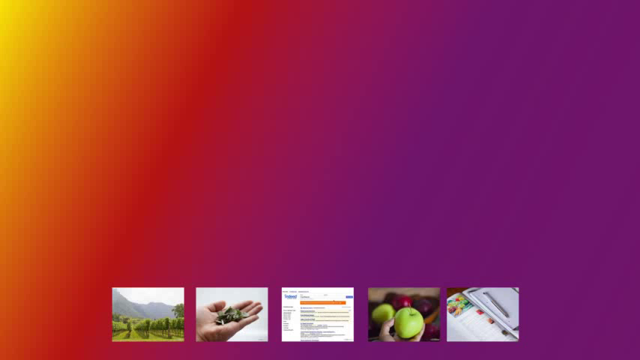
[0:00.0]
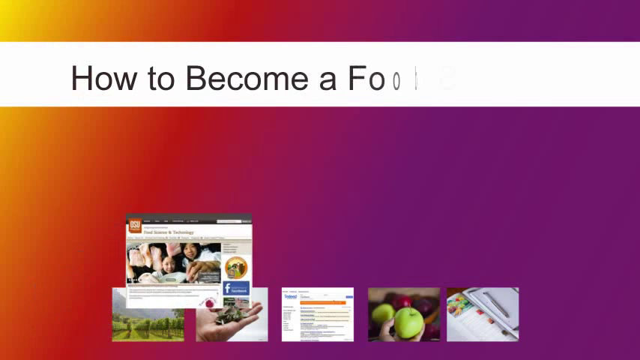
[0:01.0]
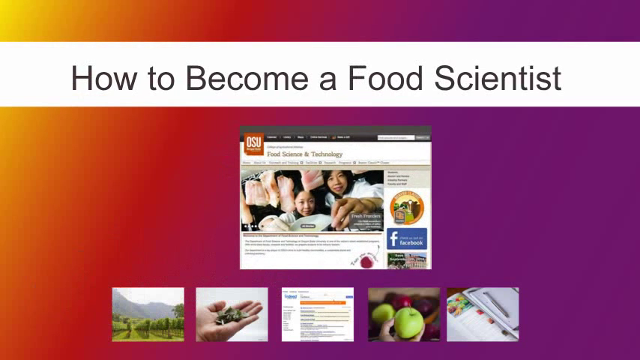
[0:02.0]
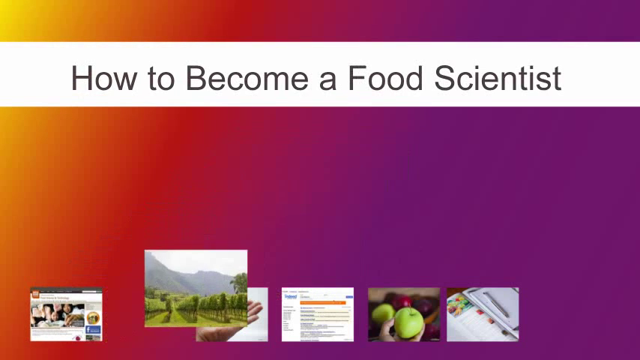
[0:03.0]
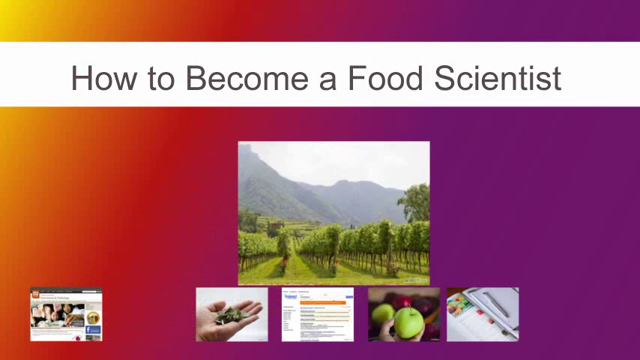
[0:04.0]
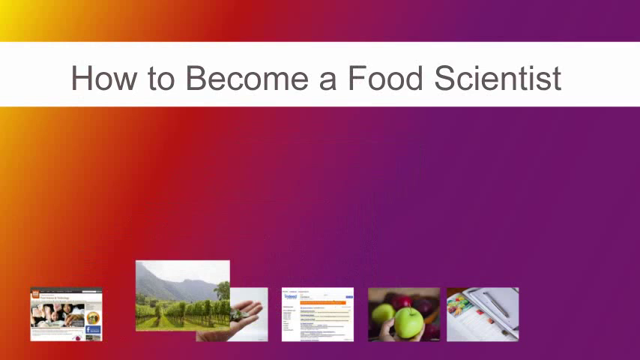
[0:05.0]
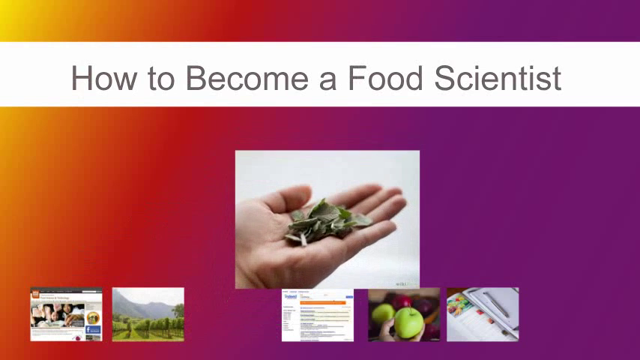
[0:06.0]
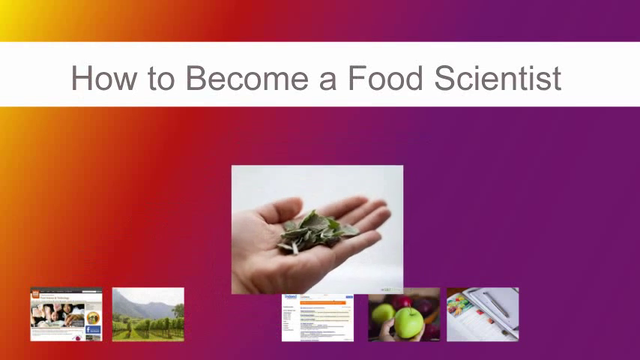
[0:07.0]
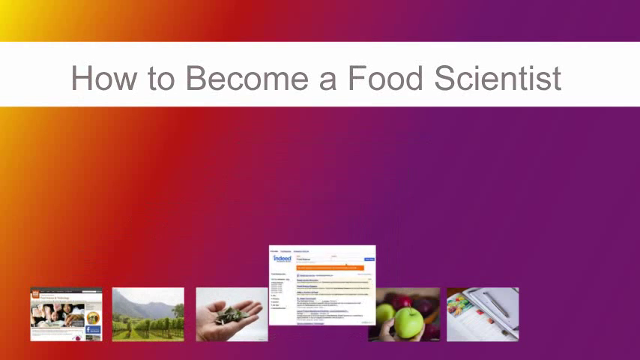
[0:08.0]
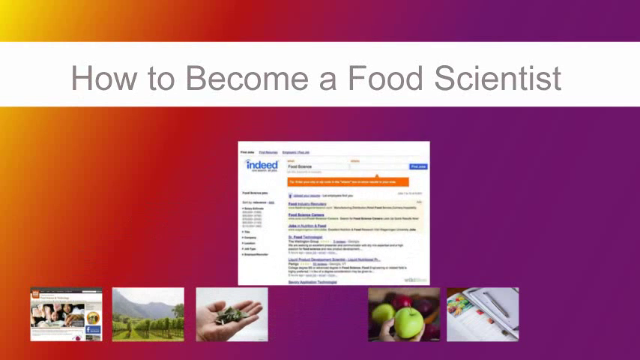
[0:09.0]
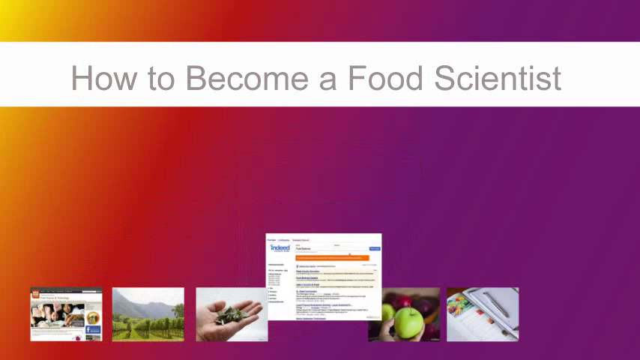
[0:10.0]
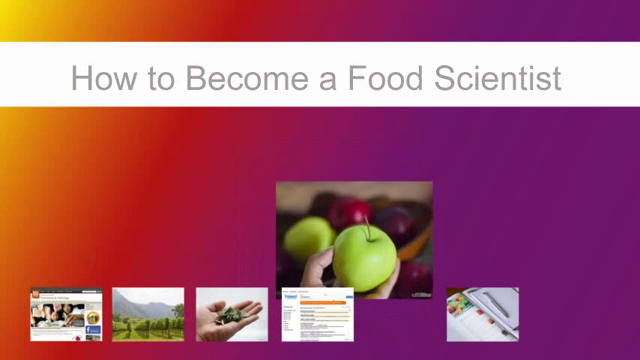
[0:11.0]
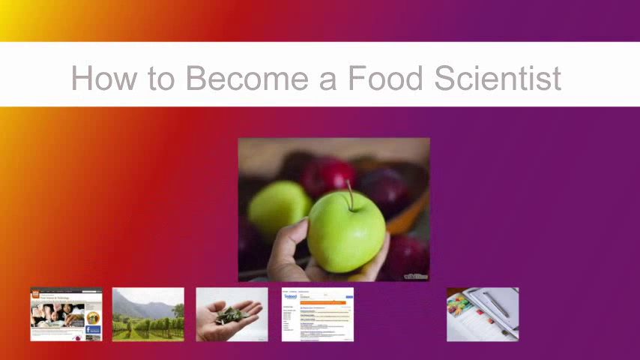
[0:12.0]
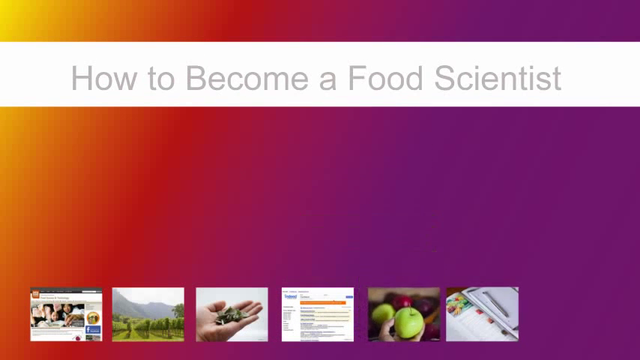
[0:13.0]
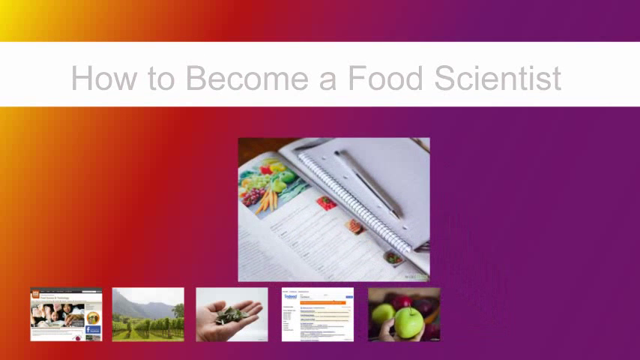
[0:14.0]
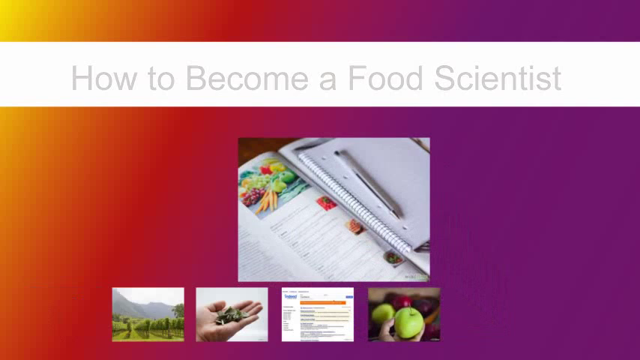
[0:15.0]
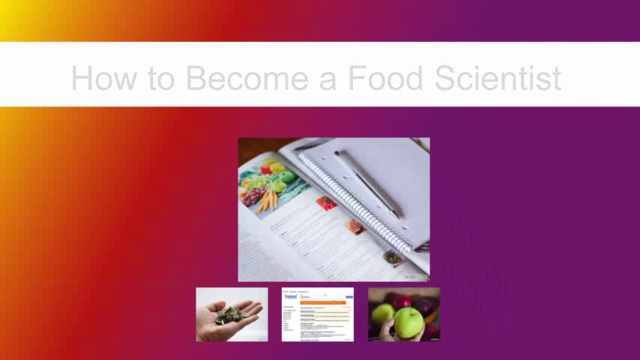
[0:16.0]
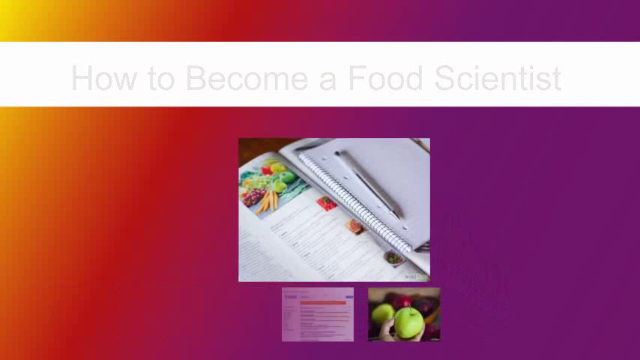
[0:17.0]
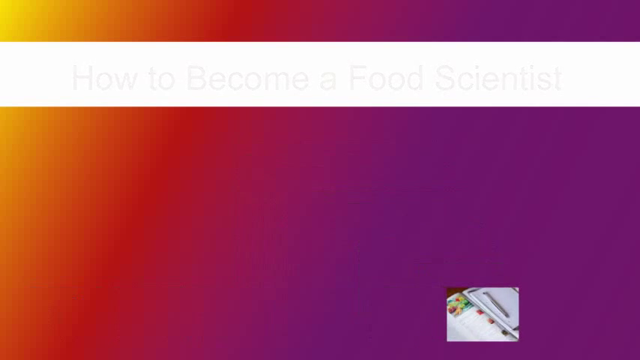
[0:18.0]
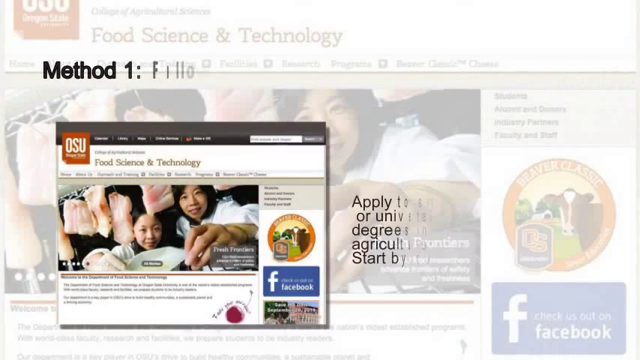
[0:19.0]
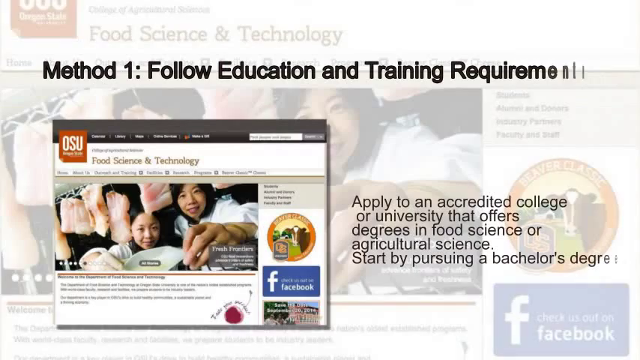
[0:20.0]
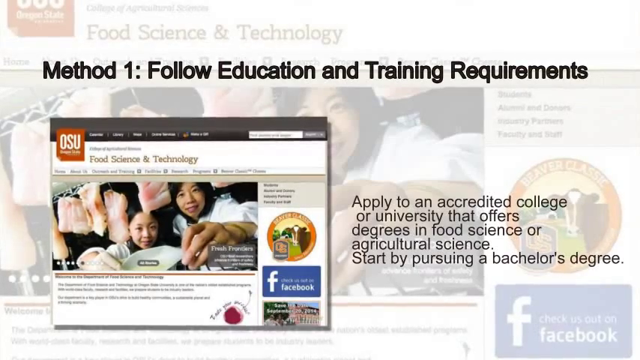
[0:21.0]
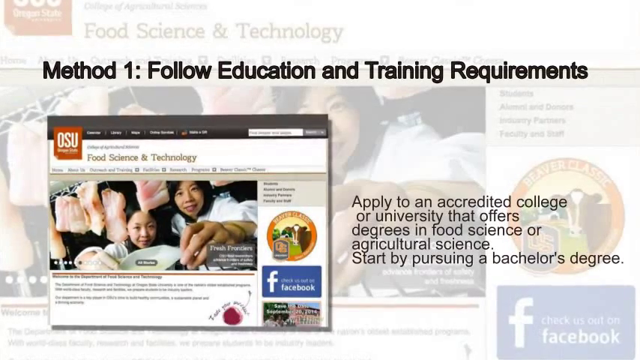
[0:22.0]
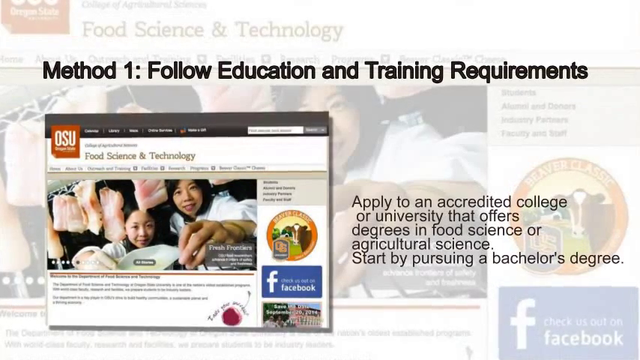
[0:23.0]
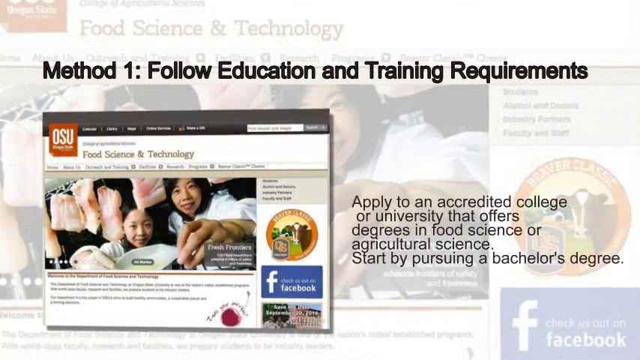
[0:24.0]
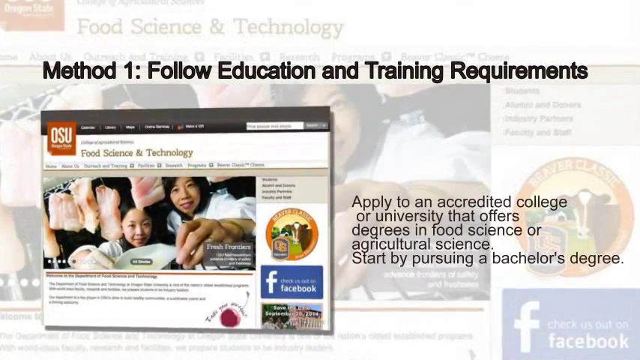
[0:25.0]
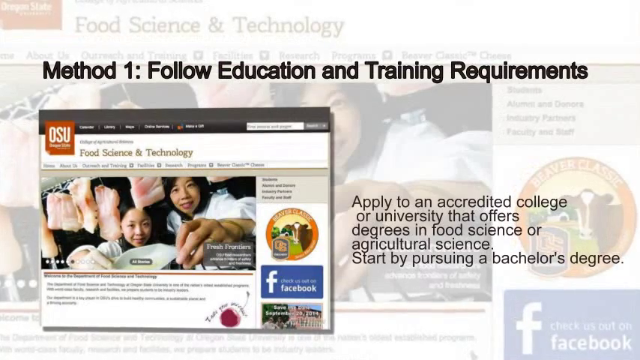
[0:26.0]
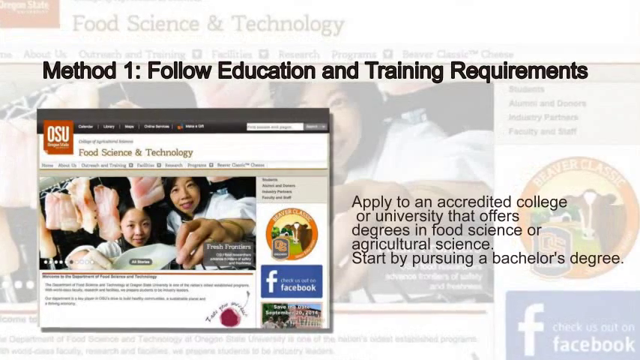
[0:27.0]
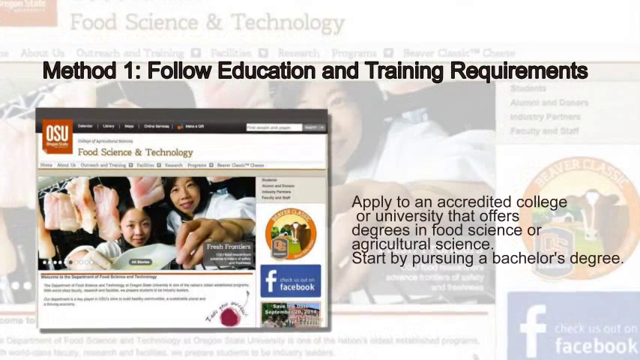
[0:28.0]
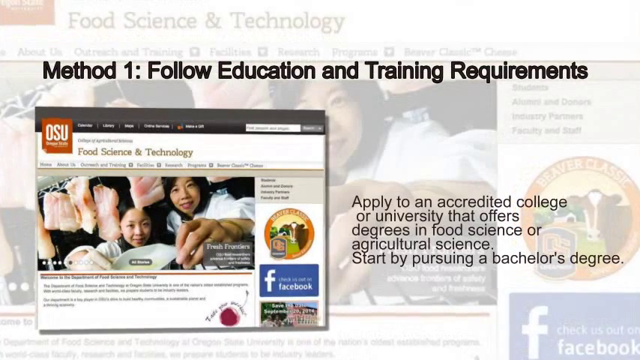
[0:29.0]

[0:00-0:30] The video is about how to become a food scientist. It opens on a multi-colored, rainbow-like background with yellow, red, pink and purple. Along the bottom are images of foods, a hand, a mountain, an article and apples. The sentence "how to become a food scientist" appears. The first image at the bottom looks like an article showing the faces of two people who seem to be shopping. Another bottom picture moves to the center, showing a hilly area with trees planted in a systematic way, then returns to the bottom. Next comes the hand carrying leaves, then it goes back; the article appears, then goes back; the apples appear, with a hand holding them; then a book, a pen and a textbook, before it goes back. The bottom pictures then disappear, and the first picture, with the people who seem to be shopping, comes up. Text reads "method one, follow education and training requirements" and "apply to an accredited college or university that offers degrees in food science or agricultural science. Start by pursuing a bachelor's degree." A whole article about food science and technology is visible.